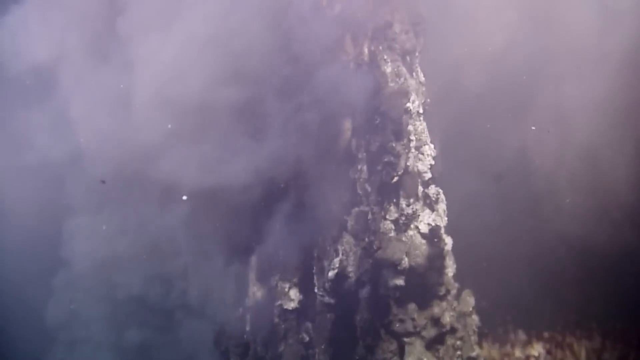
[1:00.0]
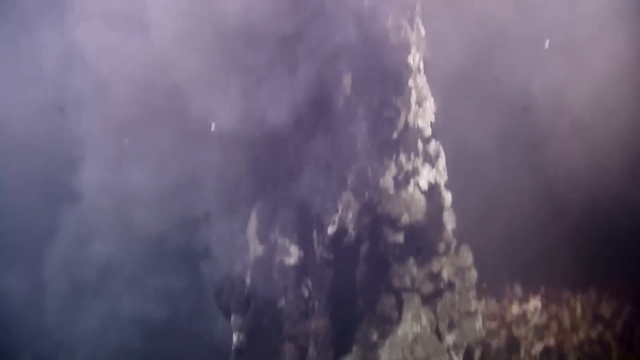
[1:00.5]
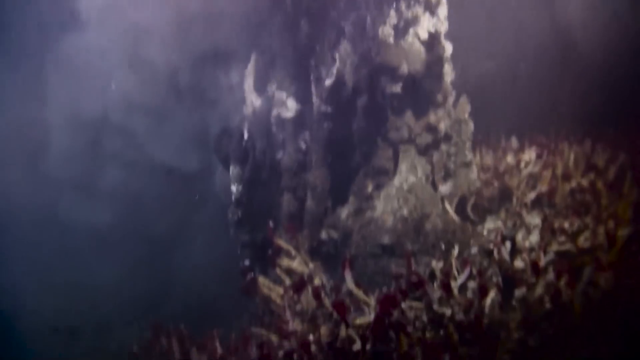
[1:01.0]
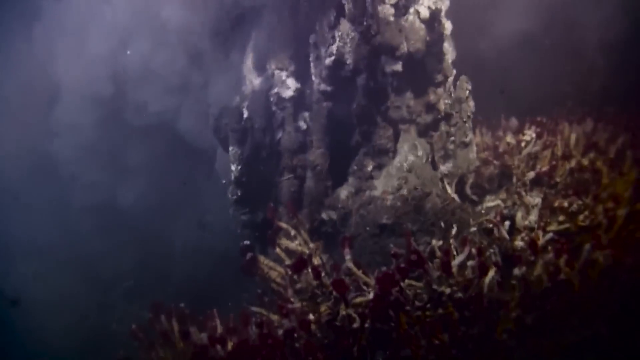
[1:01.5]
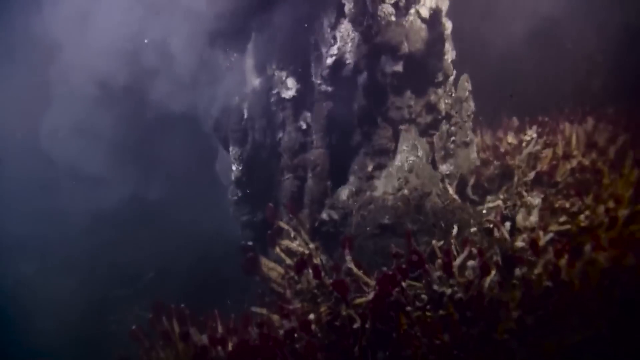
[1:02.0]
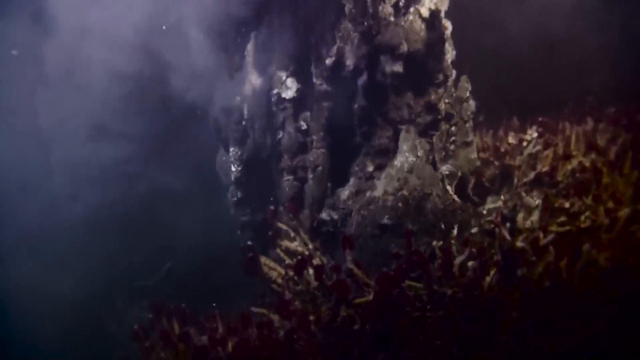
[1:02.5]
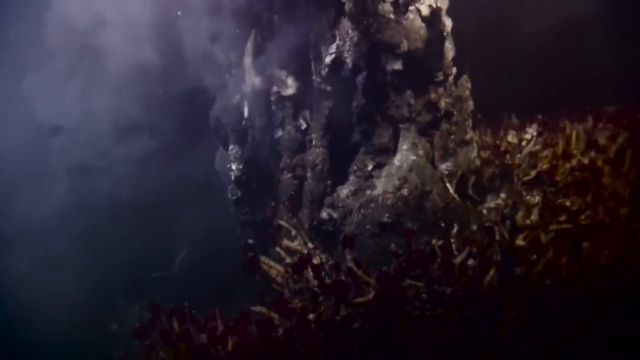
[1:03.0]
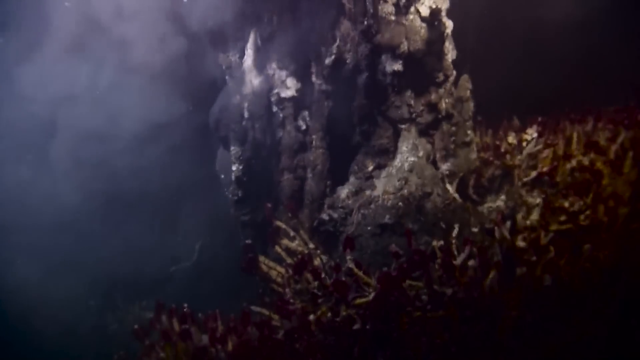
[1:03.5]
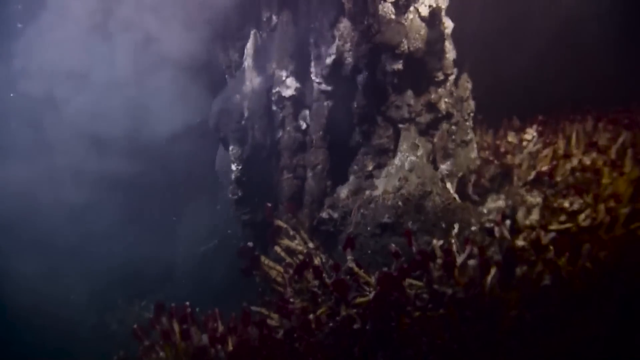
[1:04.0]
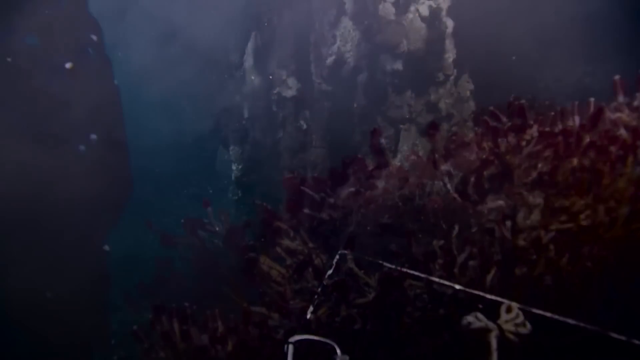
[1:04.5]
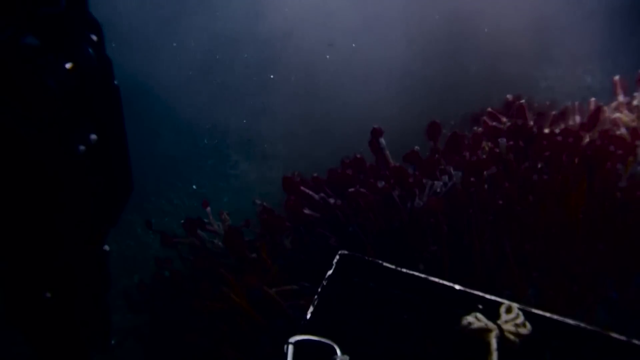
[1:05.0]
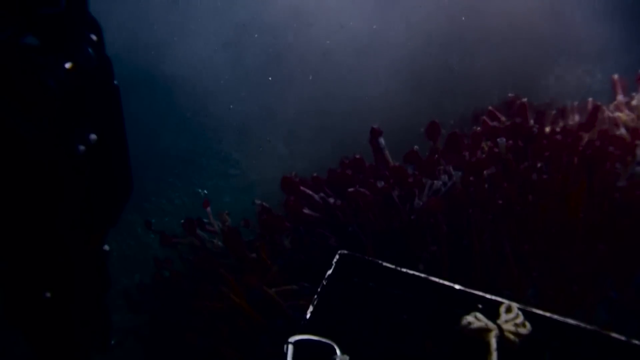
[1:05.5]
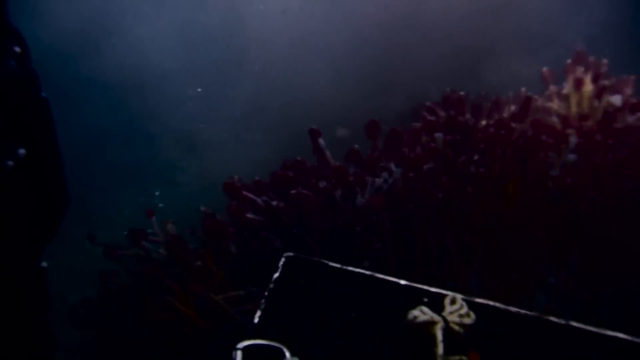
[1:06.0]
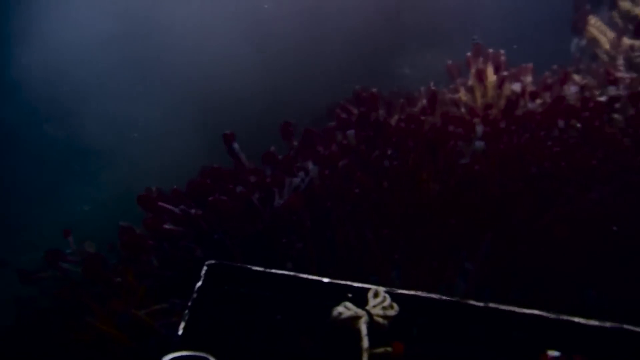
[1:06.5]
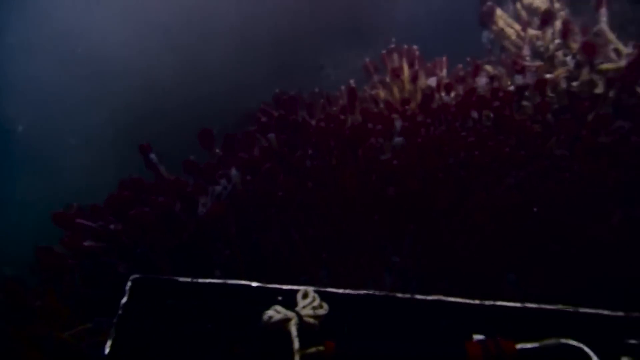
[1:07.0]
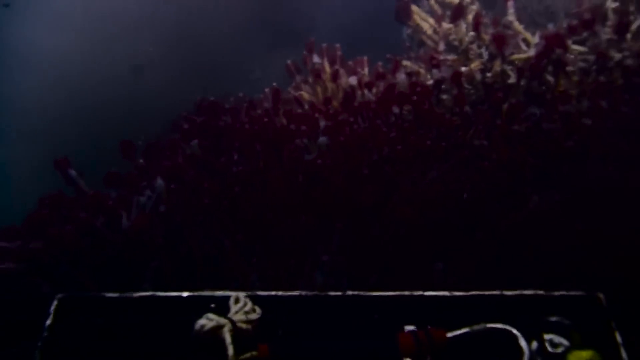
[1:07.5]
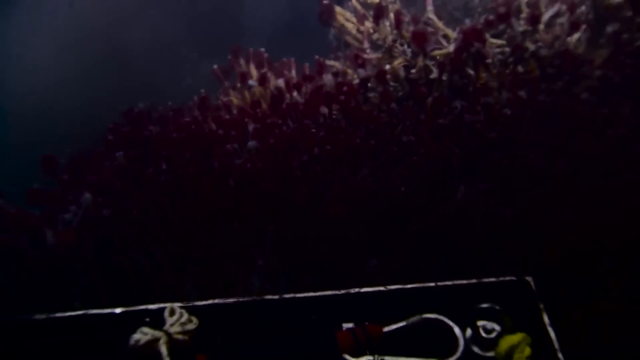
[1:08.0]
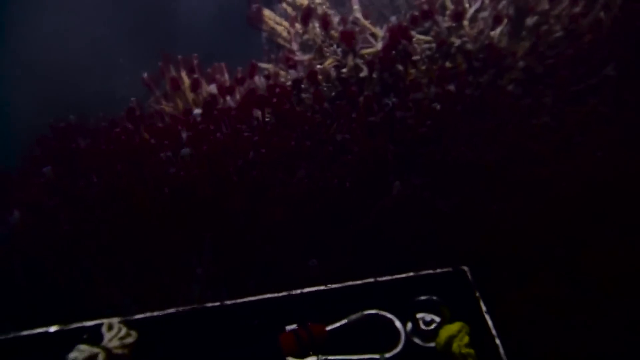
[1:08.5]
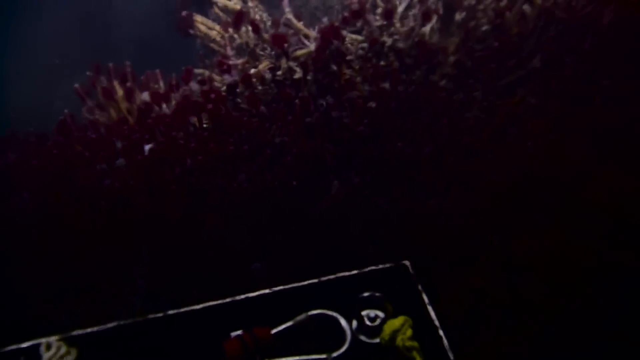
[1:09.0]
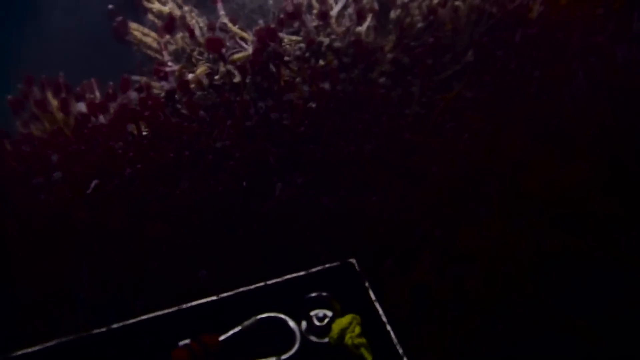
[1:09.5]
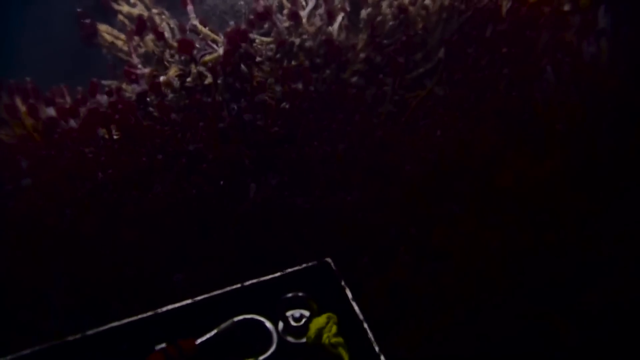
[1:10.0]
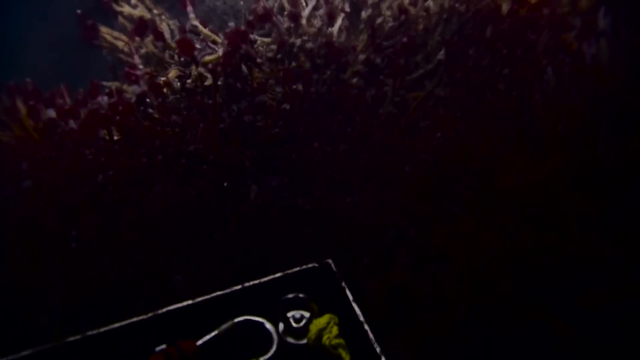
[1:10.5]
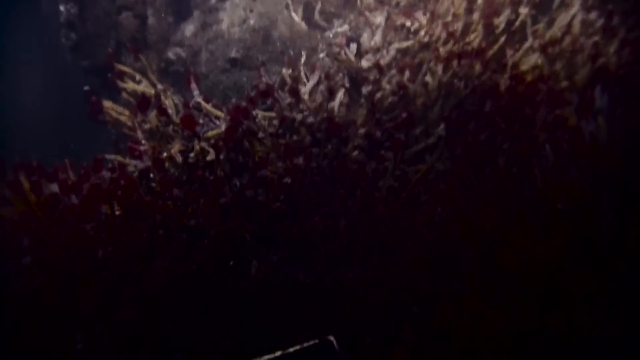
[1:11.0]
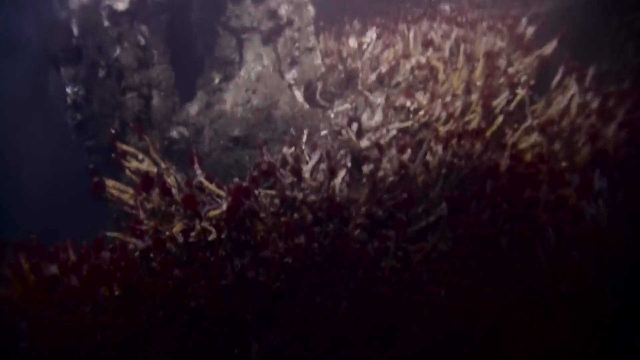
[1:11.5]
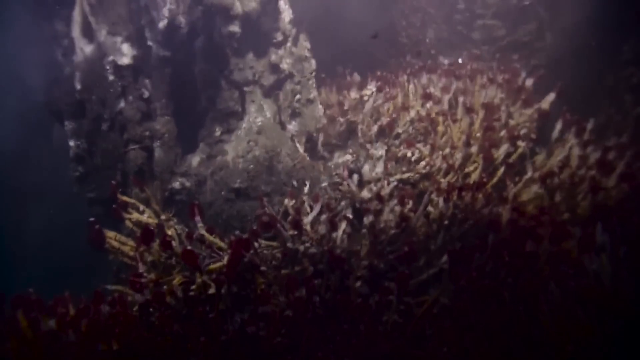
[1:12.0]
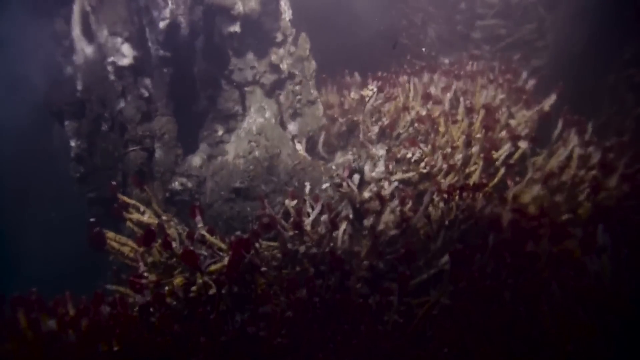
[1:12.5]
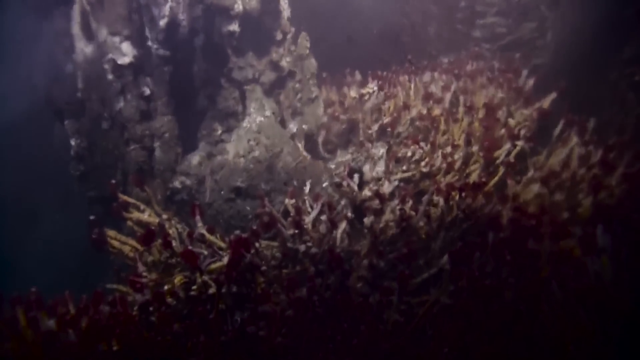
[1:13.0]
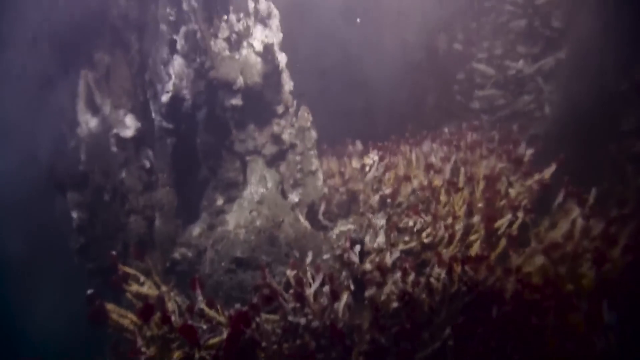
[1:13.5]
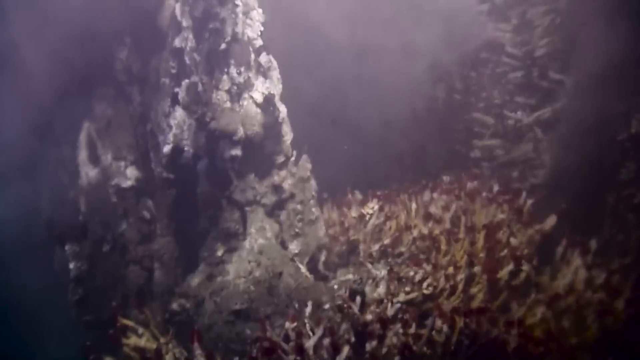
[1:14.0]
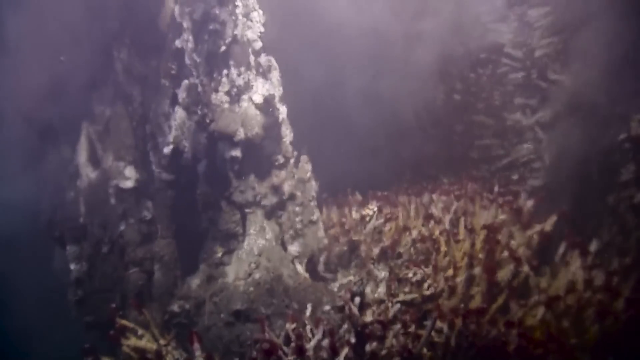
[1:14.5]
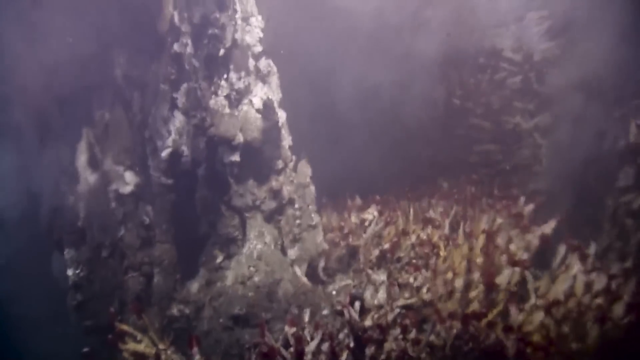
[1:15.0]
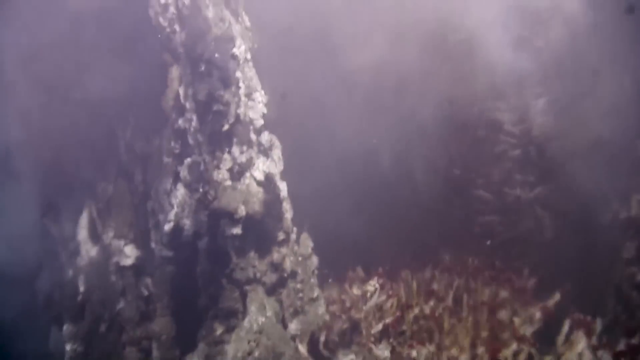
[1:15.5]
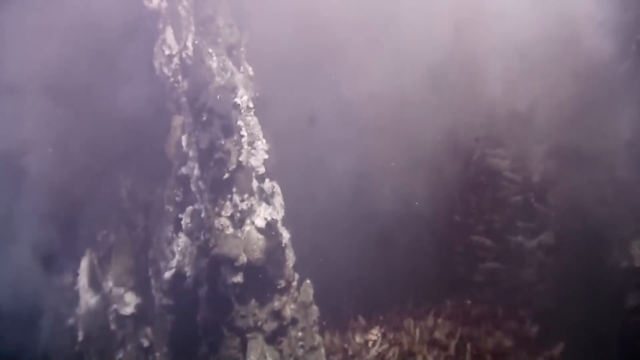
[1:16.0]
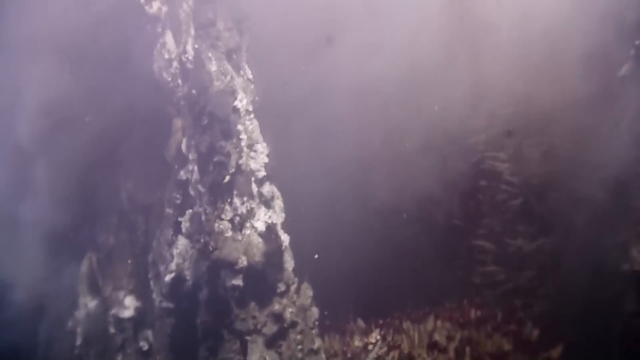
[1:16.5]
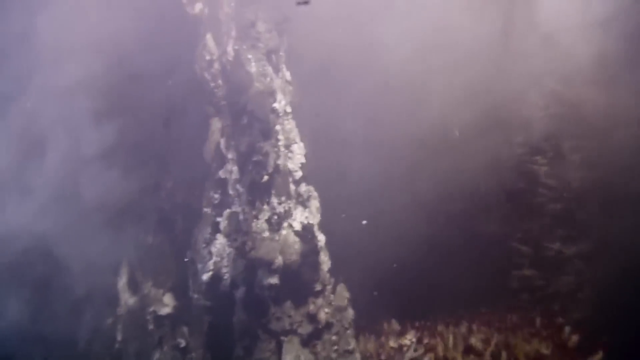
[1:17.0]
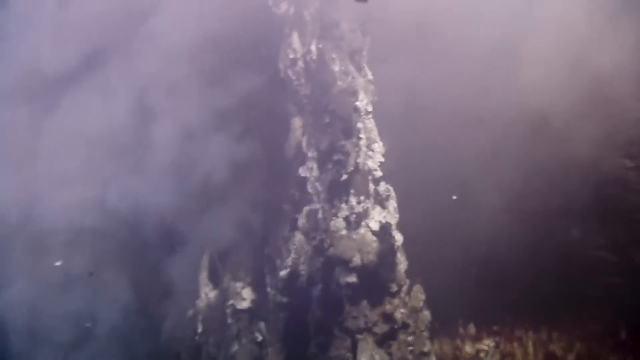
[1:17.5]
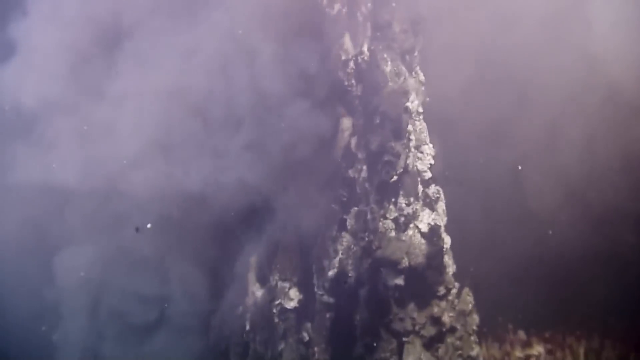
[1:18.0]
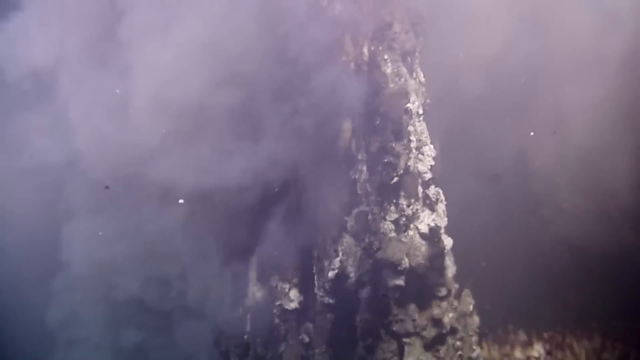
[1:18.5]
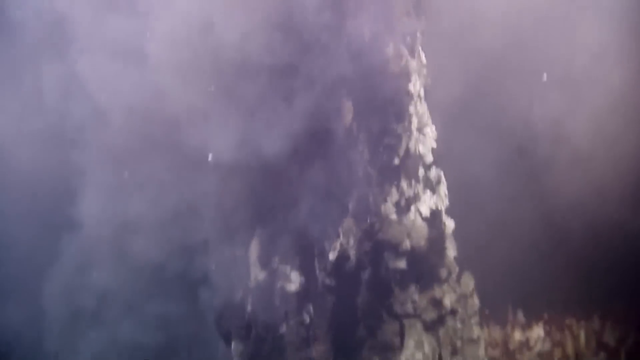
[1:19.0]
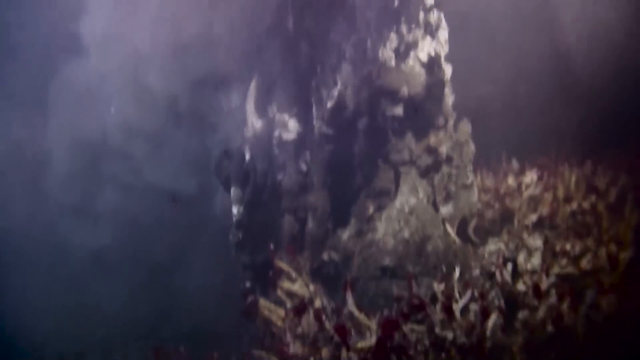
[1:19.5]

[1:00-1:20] The camera moves from top to bottom. At the top there is what looks like smoke and a long rock that looks silver and dark brown; the smoky effect covers some parts of the rock. As the camera moves down, there is what looks like a heat haze or shimmer, and the visuals look distorted. Yellow and red coral is around the rock, along with more of what looks like smoke, and creatures that appear as white dots move around. More red coral is further down below. The camera moves to the right, showing more red coral, then moves up to show more yellow coral and the rock. It moves up again, showing more of the rock, which is a bit rusty and silver, more smoke, and the visual distortion resembling a heat shimmer. The camera then moves to the left and down.